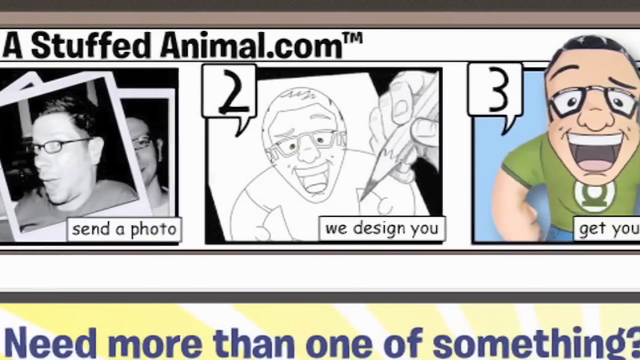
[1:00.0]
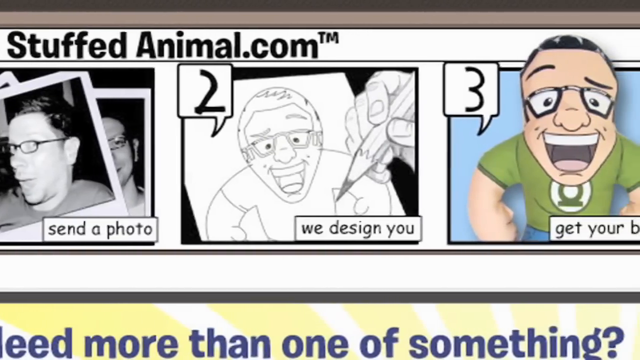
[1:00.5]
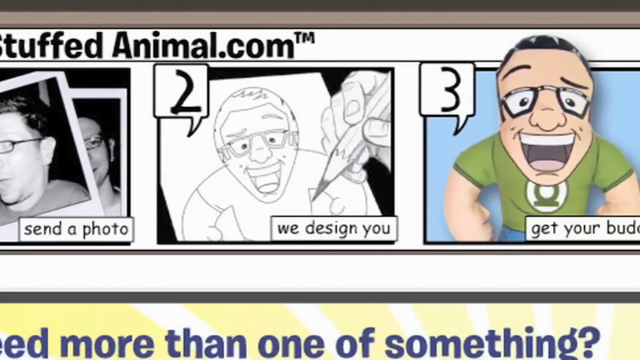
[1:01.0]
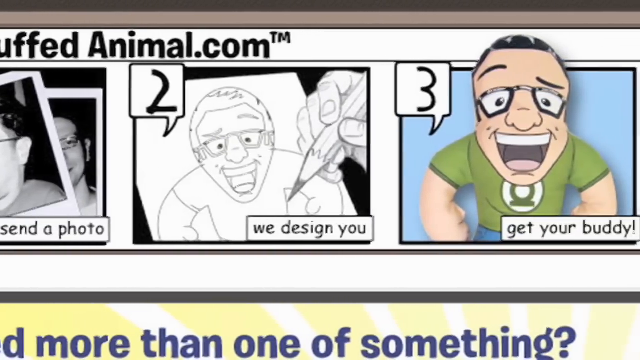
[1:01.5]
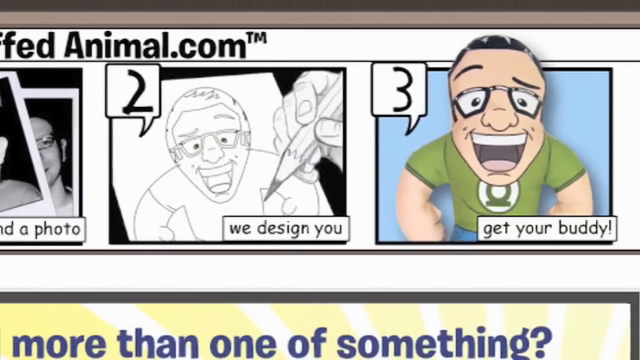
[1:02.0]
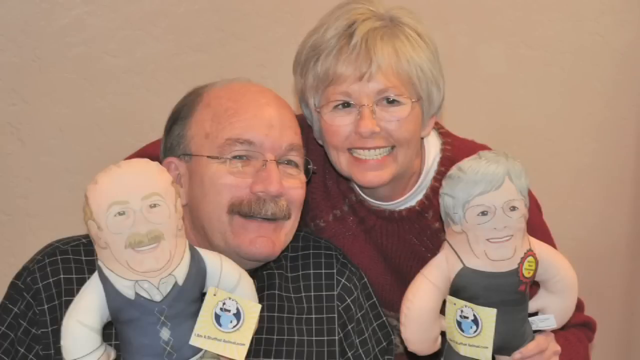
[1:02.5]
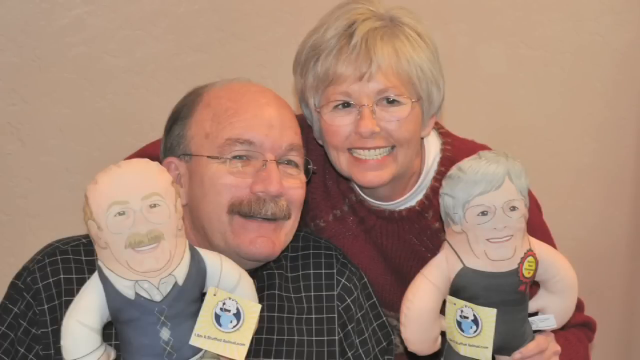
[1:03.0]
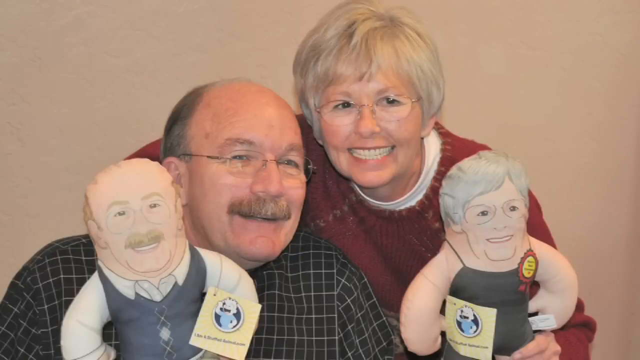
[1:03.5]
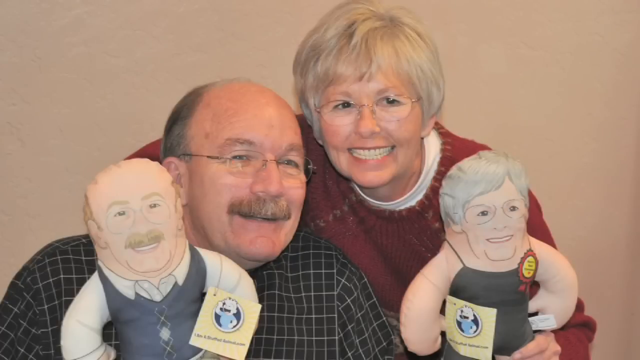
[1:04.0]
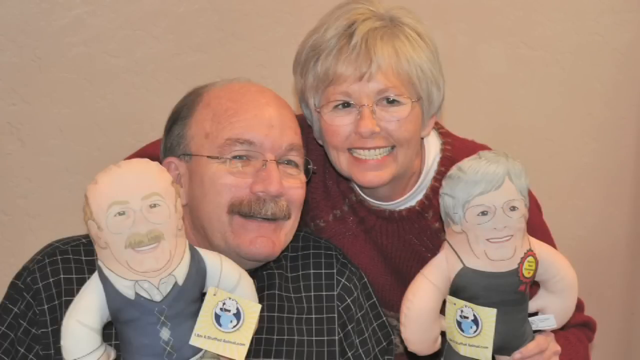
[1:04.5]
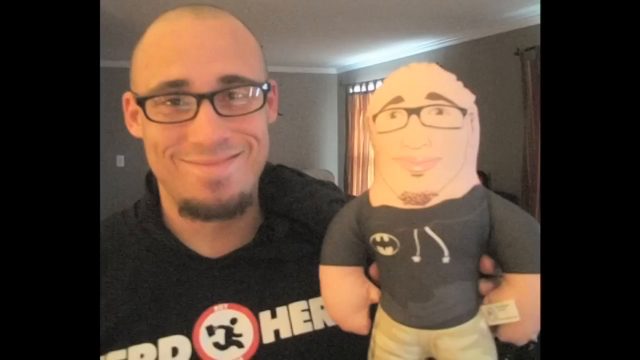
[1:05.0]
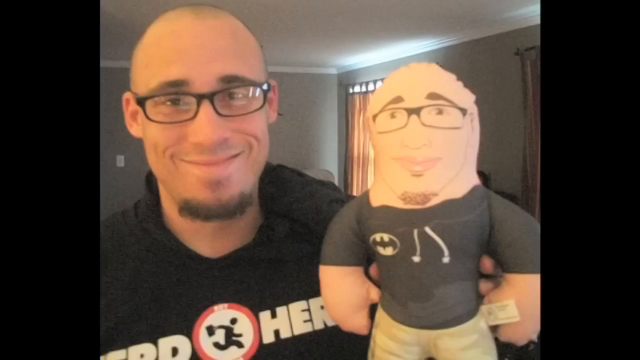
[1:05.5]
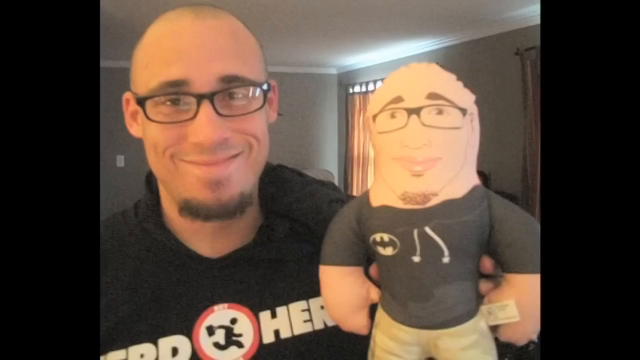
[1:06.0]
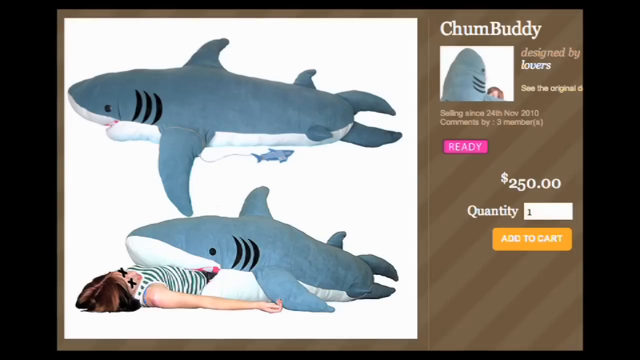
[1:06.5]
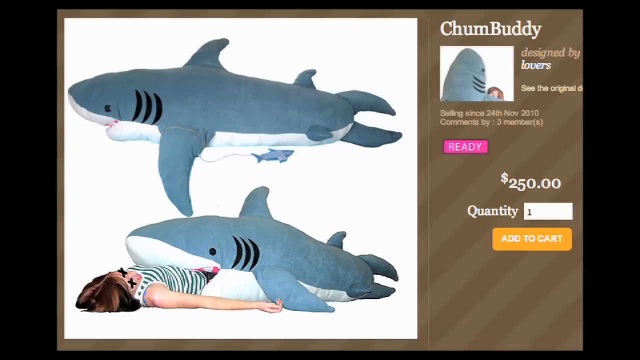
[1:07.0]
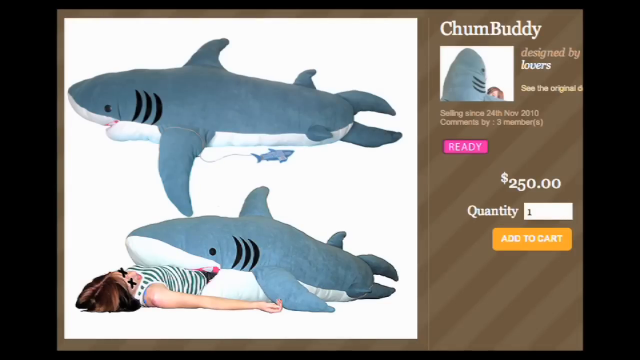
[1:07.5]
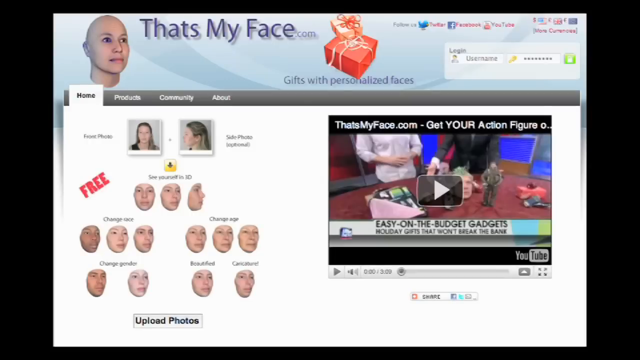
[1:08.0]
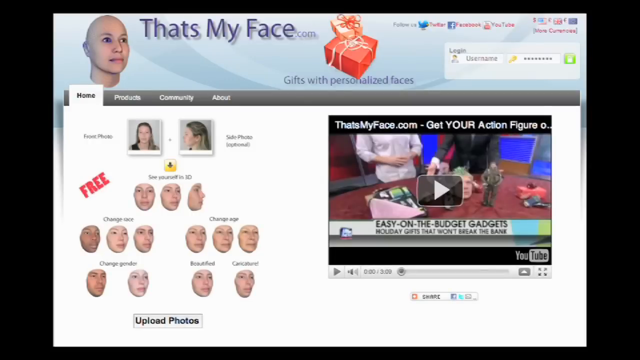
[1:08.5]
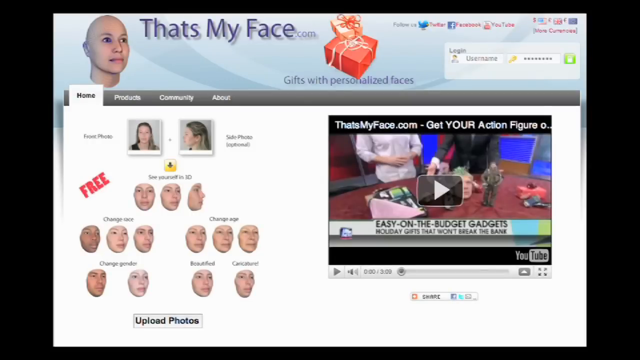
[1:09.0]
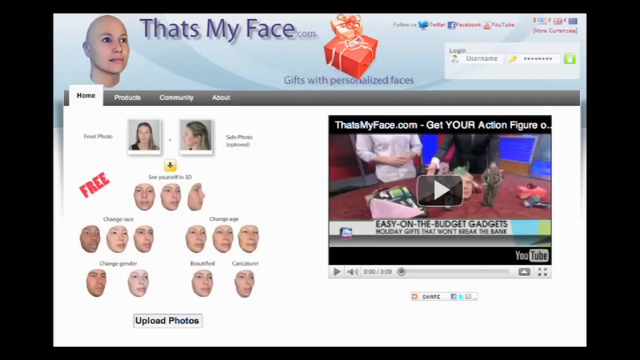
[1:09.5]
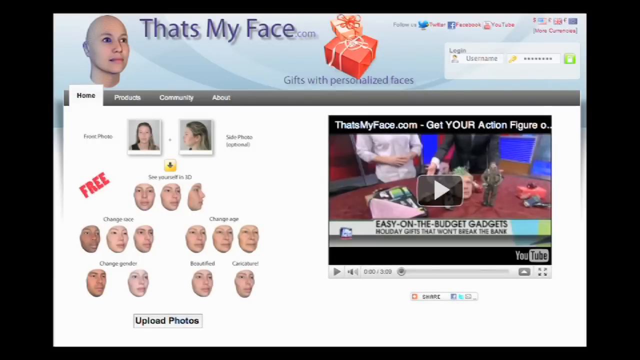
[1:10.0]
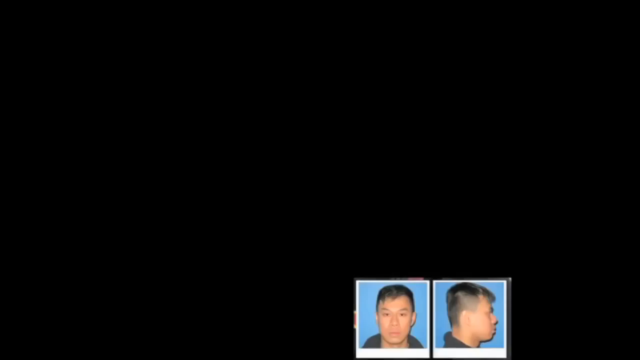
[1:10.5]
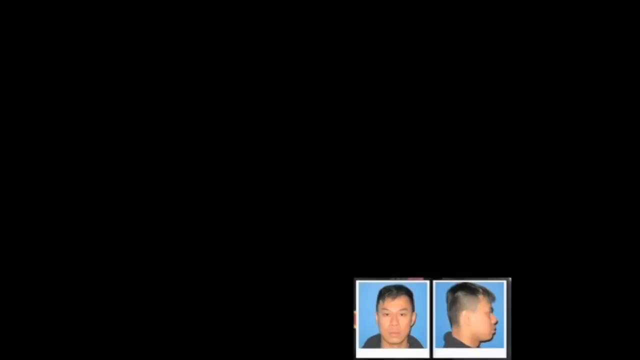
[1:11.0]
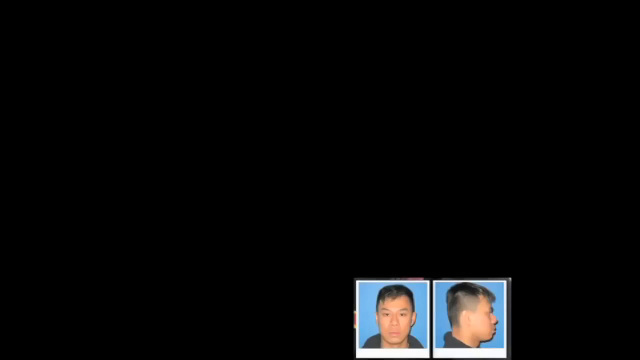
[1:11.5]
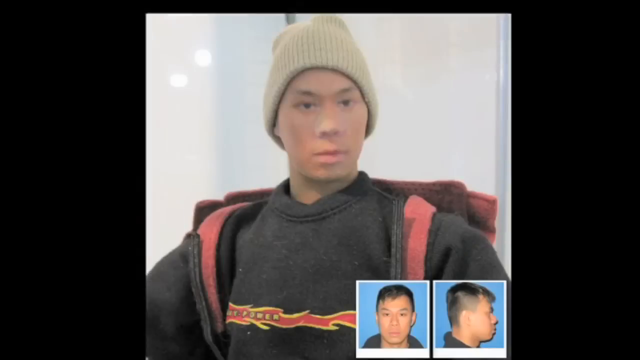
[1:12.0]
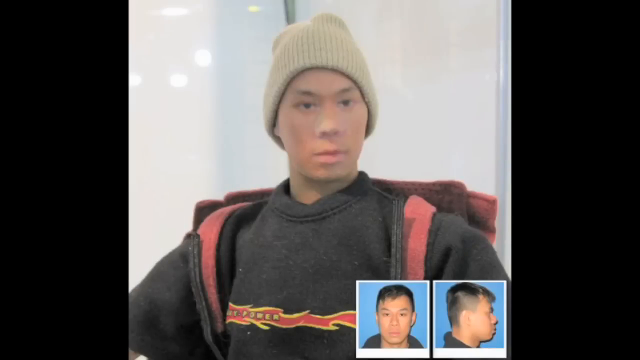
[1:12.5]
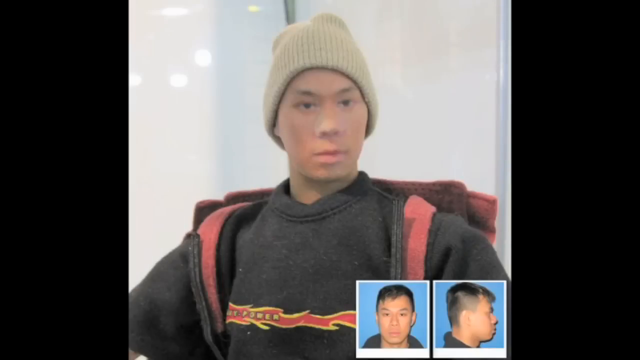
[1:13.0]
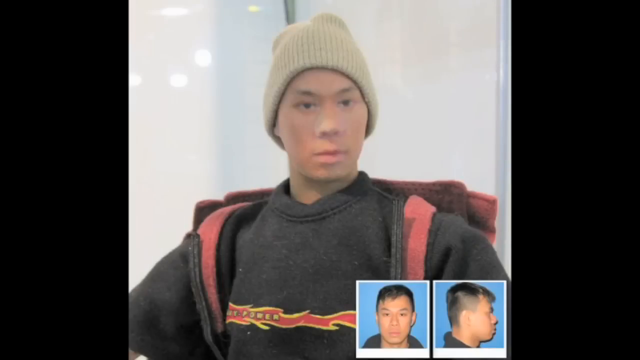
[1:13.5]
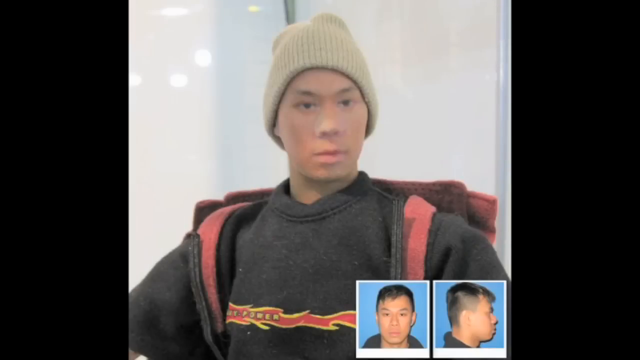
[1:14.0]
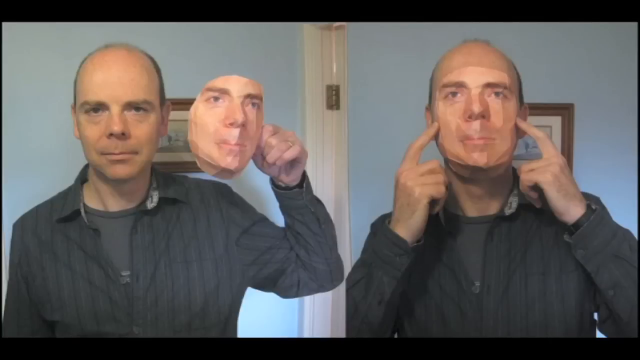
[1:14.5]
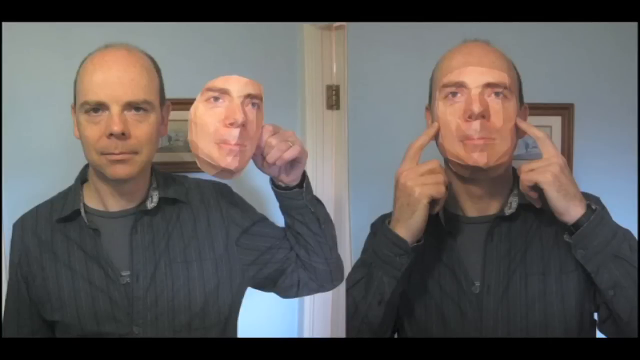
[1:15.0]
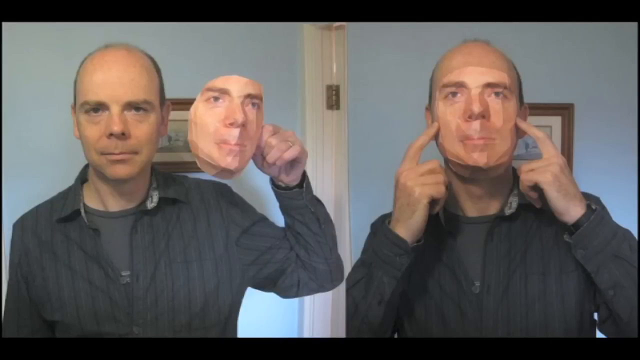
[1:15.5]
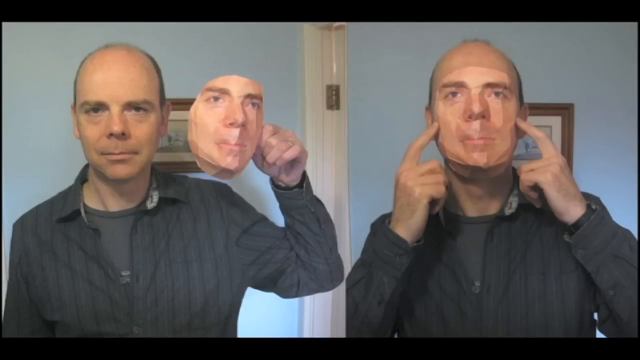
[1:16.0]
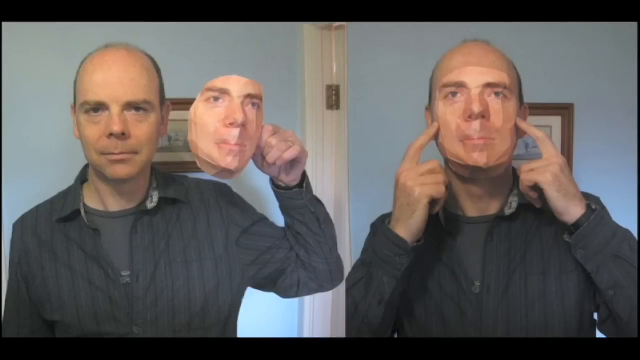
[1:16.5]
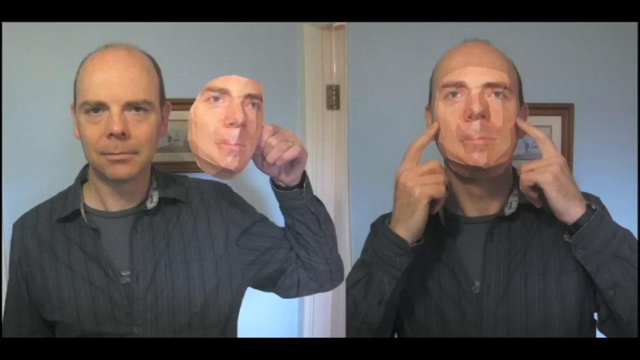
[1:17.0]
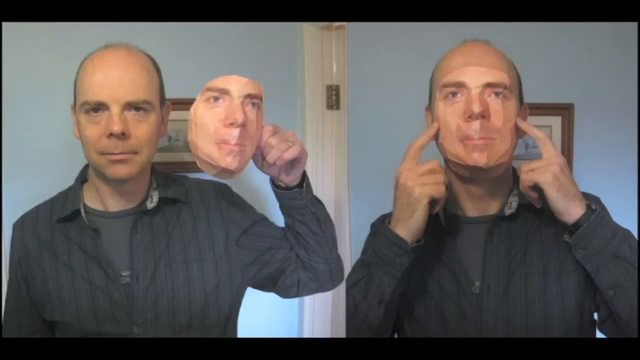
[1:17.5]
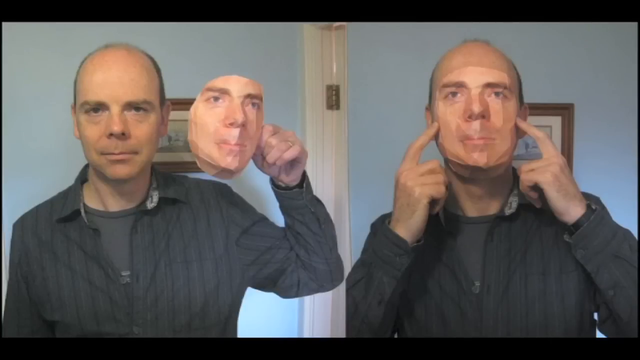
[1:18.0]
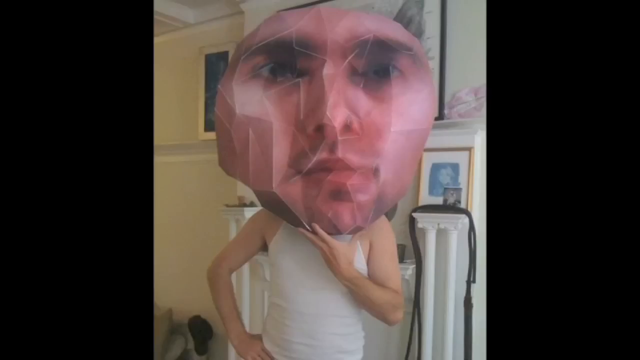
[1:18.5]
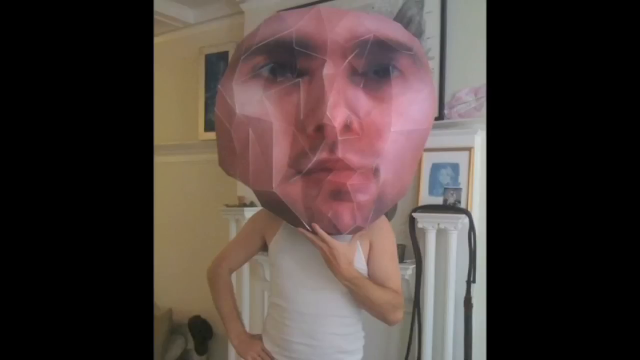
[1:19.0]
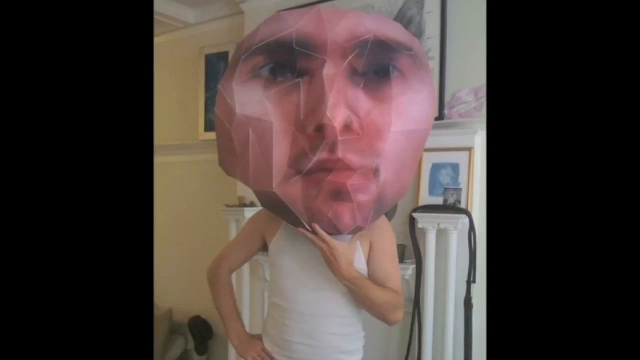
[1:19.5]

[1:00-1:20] A cartoon strip shows, on the left, a black and white picture of a person wearing glasses. In the middle is a drawn black and white picture of a character also wearing glasses, with a drawn hand that seems to be drawing the character. On the right is another picture that looks colored in, with the figure wearing a green shirt, colored pants and glasses. Next, a man and a woman pose for a picture, both holding up dolls that look exactly like them, and then another man holds up a doll that looks like him, wearing glasses. A sleeping bag shaped like a shark appears with a woman lying down inside it. The video cuts to a website titled "that's my face" with a bunch of faces underneath, and shows what looks like a mannequin. A man holds up a face that looks like his own, with a side view of him putting it on shown on the right side. Then another guy holds up a gigantic version of his face against his head.